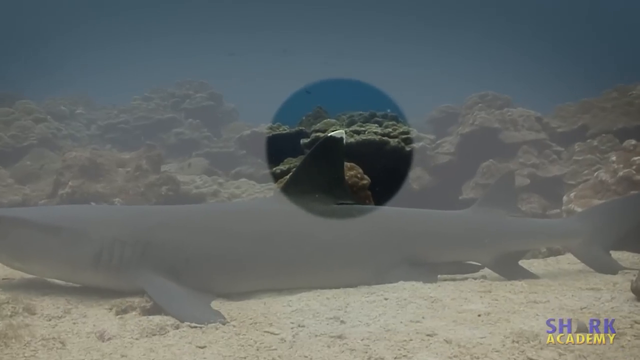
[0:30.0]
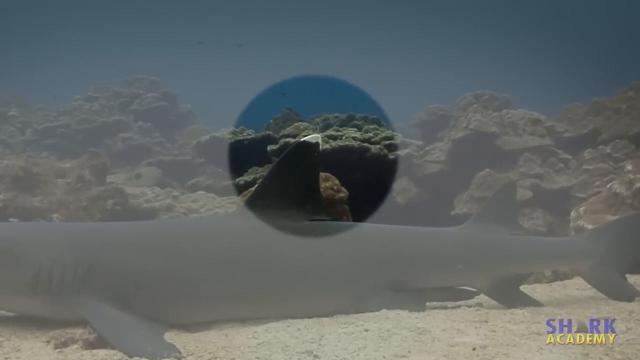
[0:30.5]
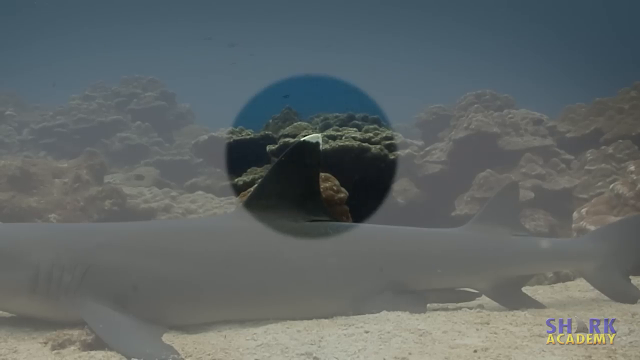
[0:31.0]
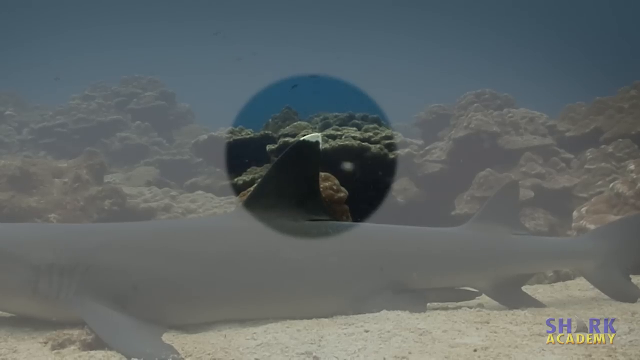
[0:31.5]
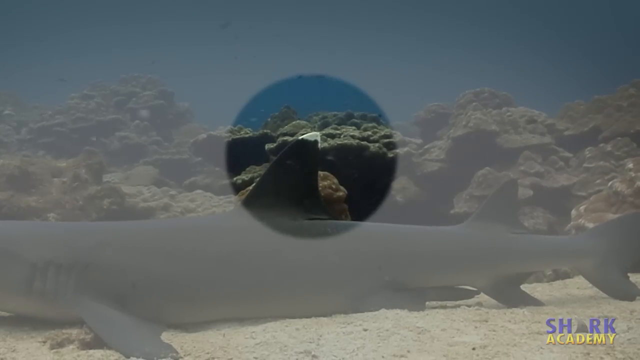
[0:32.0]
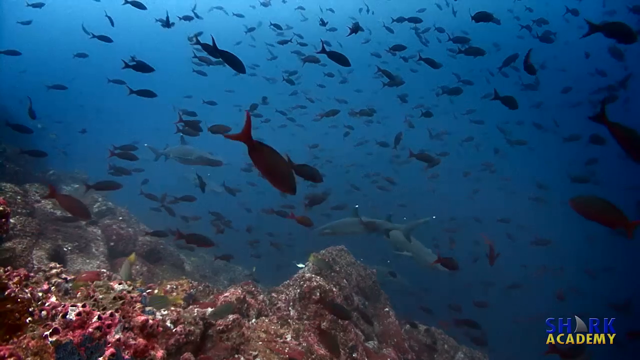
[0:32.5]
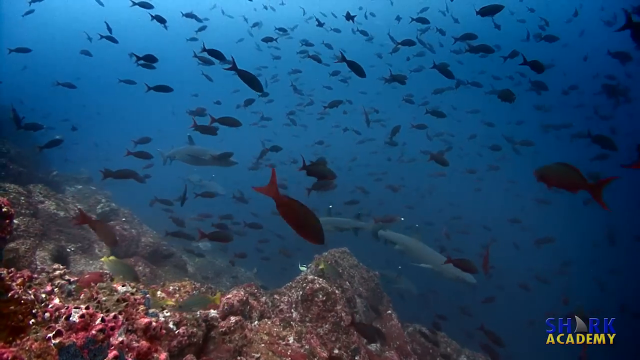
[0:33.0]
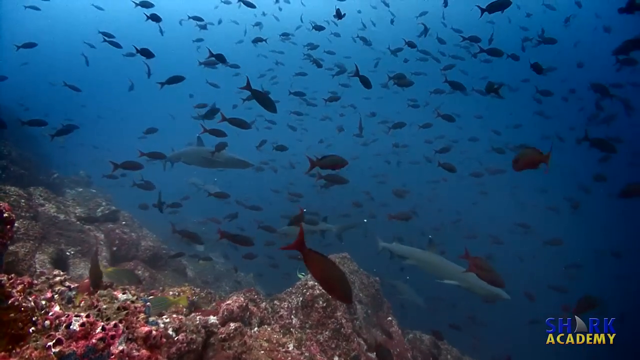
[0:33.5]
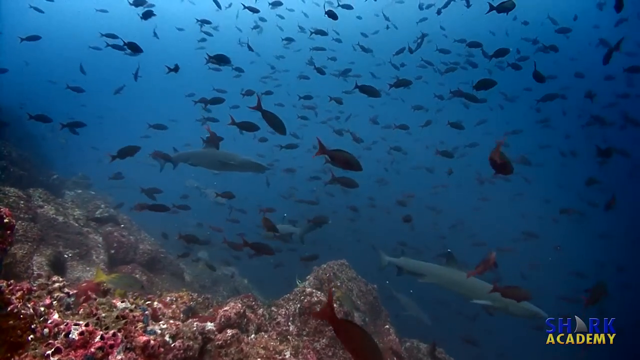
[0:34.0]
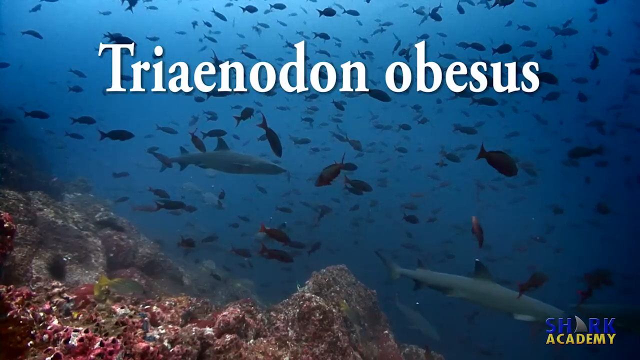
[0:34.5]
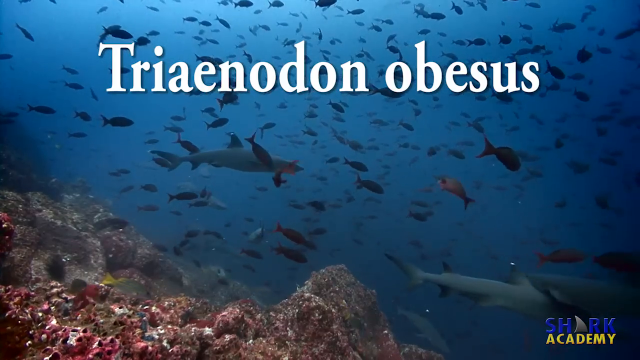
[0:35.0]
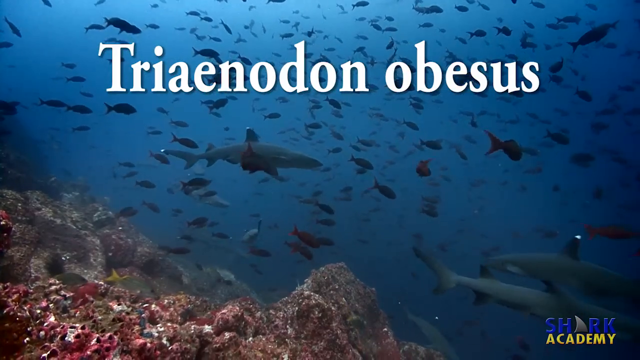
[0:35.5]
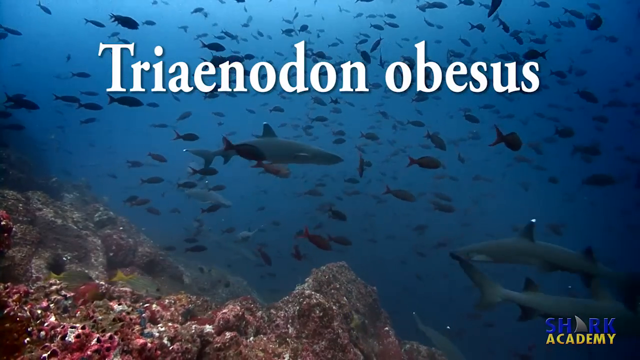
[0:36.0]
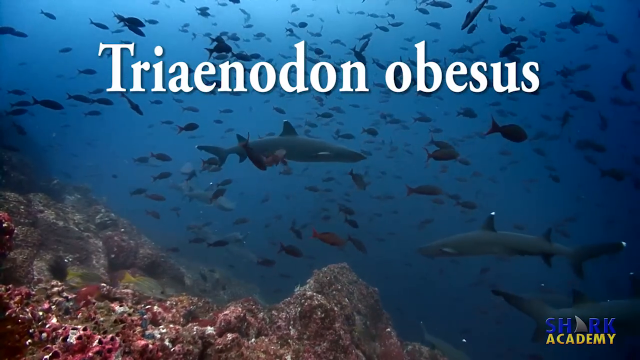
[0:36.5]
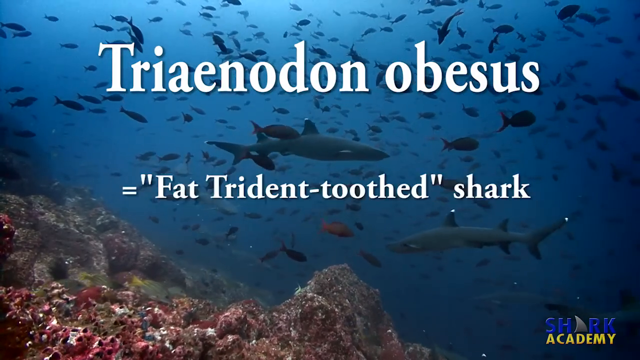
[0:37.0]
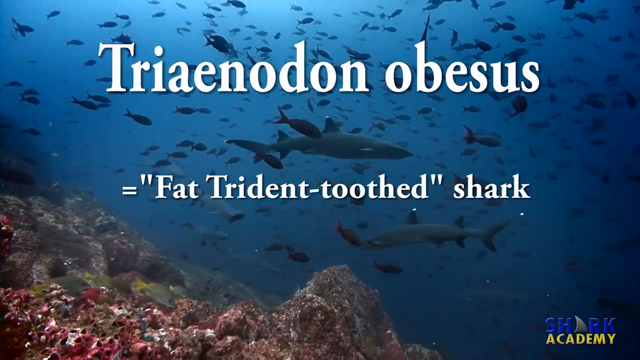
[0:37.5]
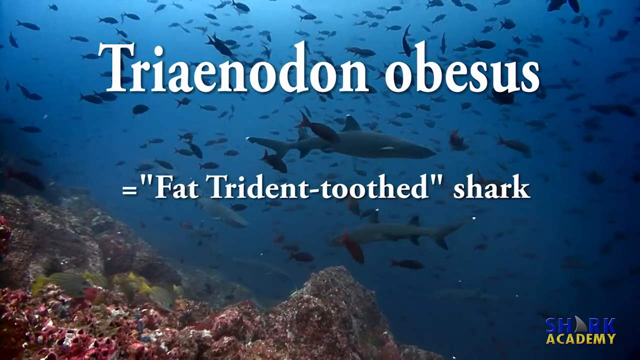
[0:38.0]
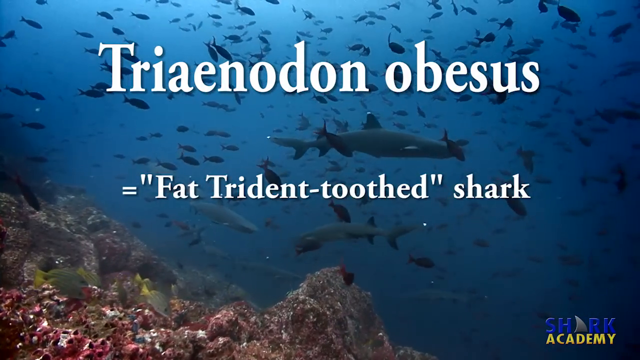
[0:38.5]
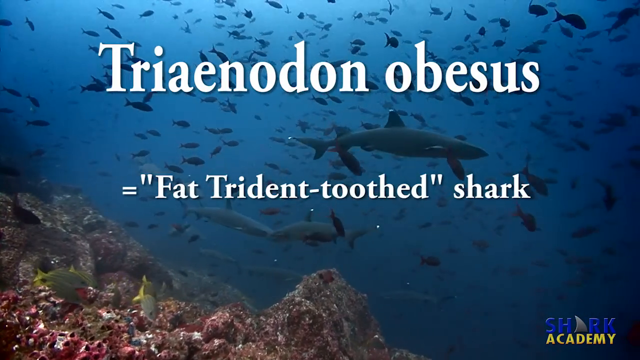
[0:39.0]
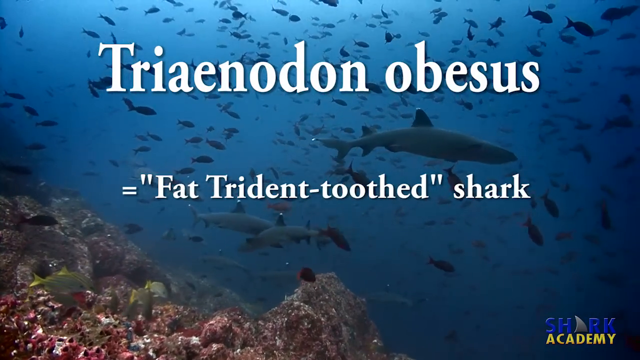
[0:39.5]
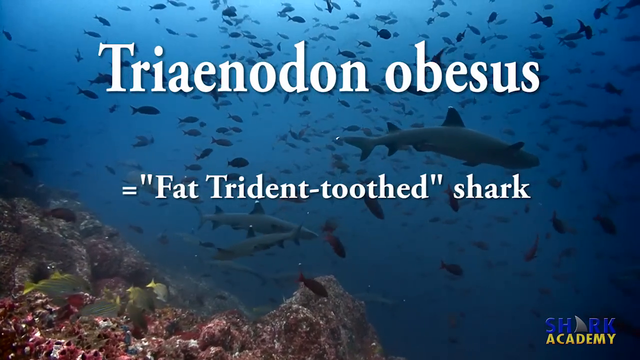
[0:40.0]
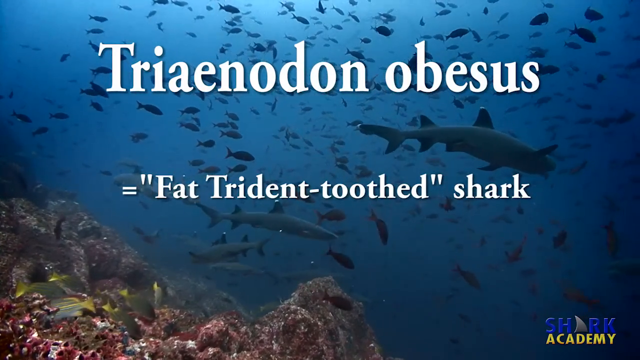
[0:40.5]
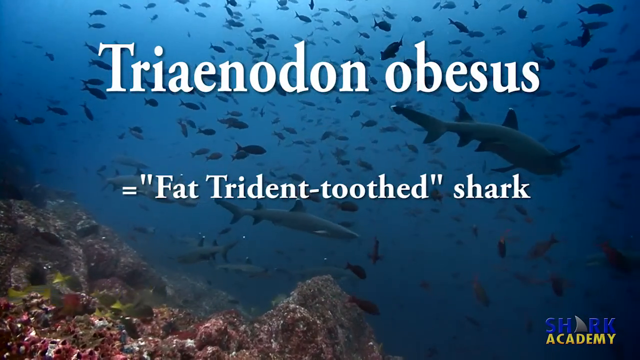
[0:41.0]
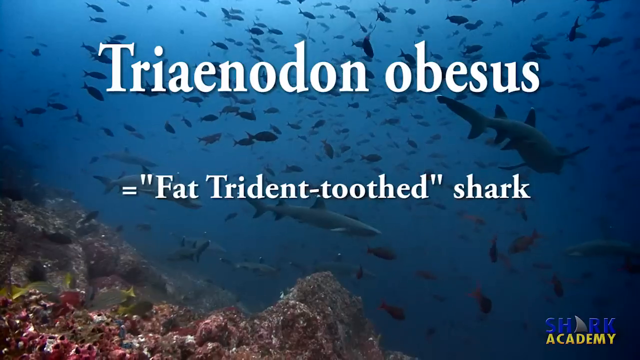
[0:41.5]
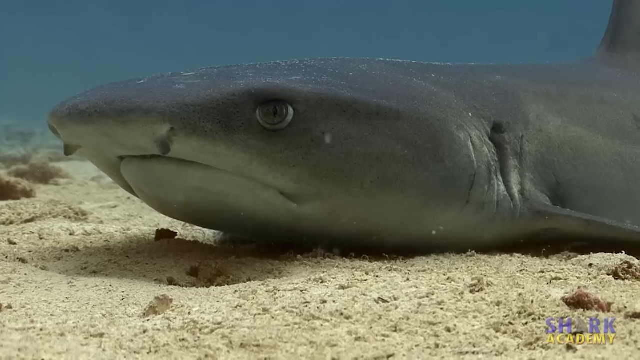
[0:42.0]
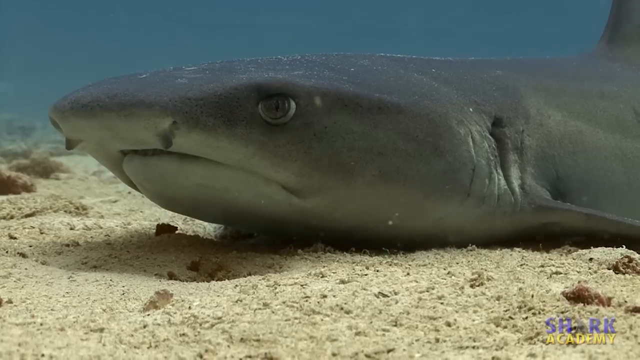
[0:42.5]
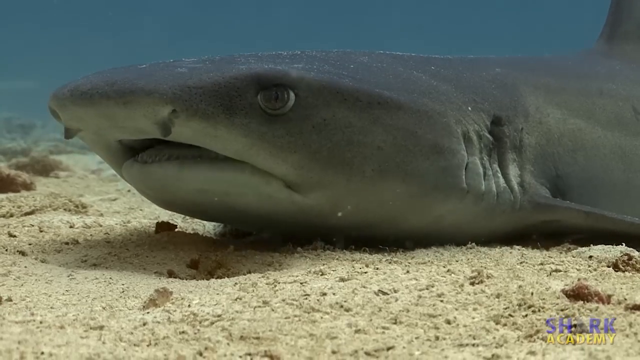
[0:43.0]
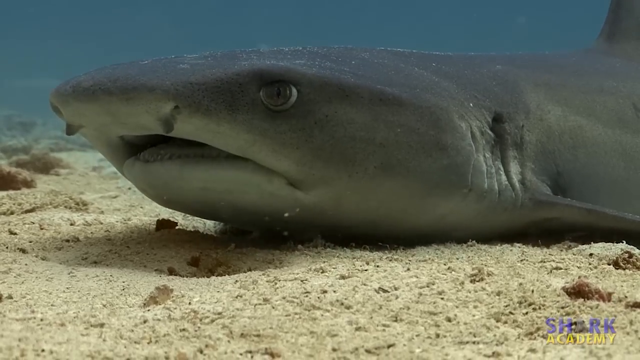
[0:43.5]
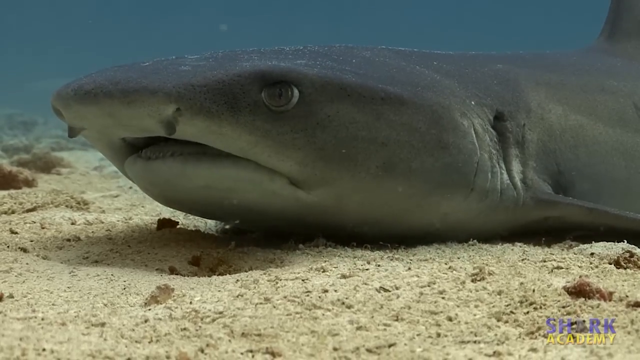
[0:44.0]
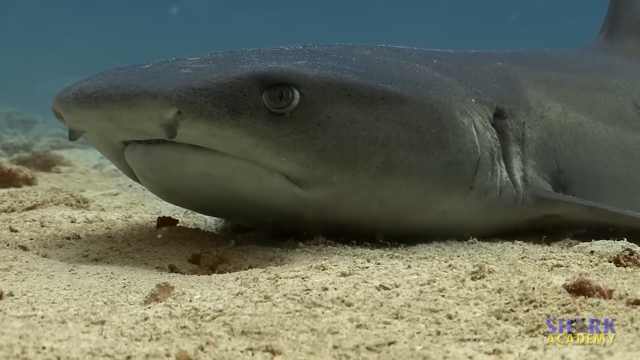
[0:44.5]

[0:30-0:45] The close-up of the shark's dorsal fin gives way to a scene of a shark swimming in bright blue water with lots of fish, many of them smaller, swimming around it, and the seabed to the lower left of the screen. White text then appears in the center of the screen reading: Triaenodon obesus = "Fat Trident-toothed shark." Next comes another close-up of the shark lying on the seabed with its mouth opening and closing, and at the very end an overlay of what looks like a shark's tooth appears in the center of the screen.